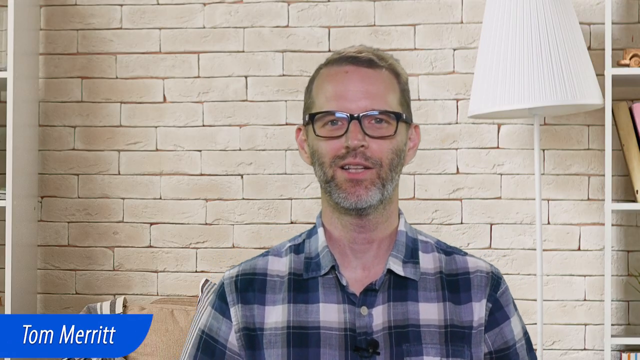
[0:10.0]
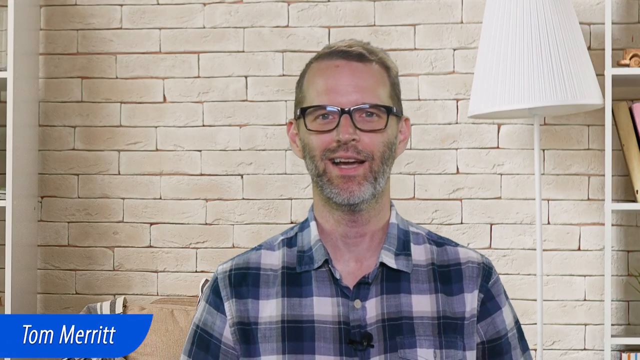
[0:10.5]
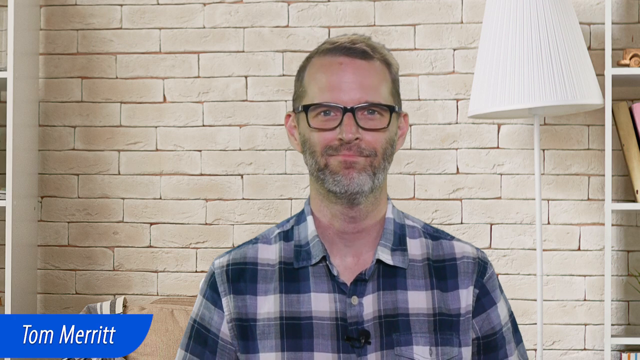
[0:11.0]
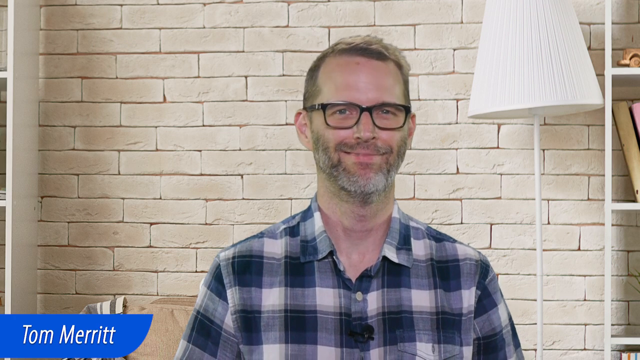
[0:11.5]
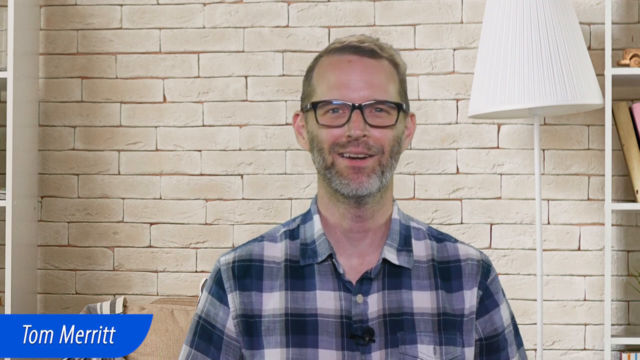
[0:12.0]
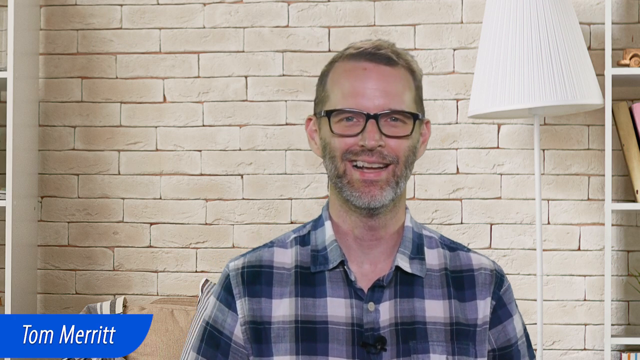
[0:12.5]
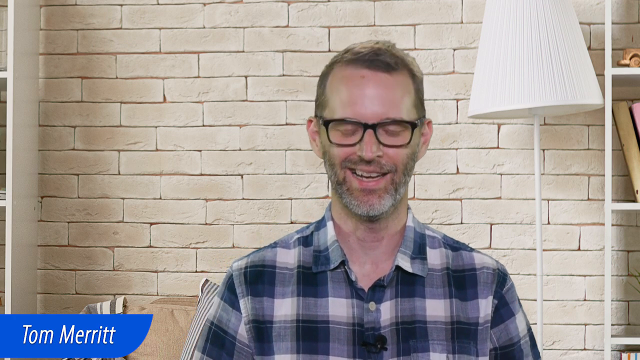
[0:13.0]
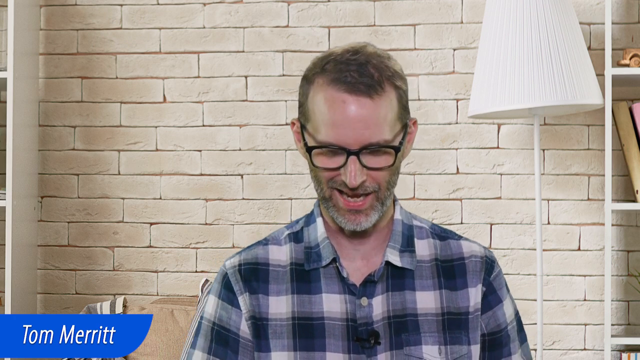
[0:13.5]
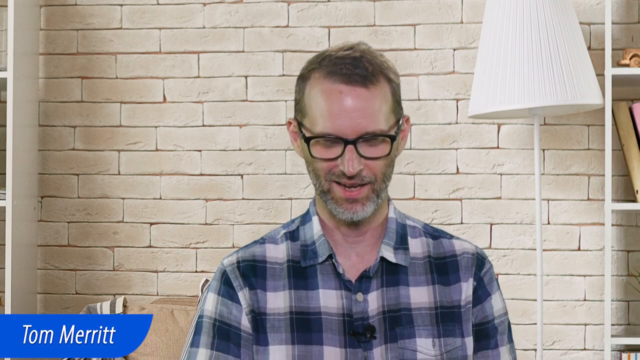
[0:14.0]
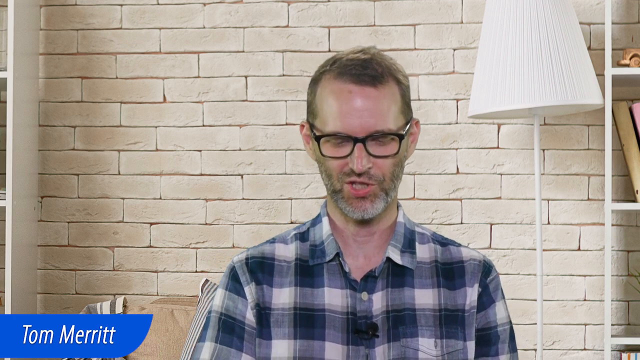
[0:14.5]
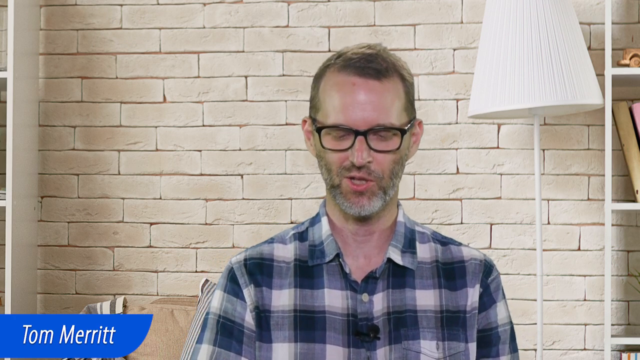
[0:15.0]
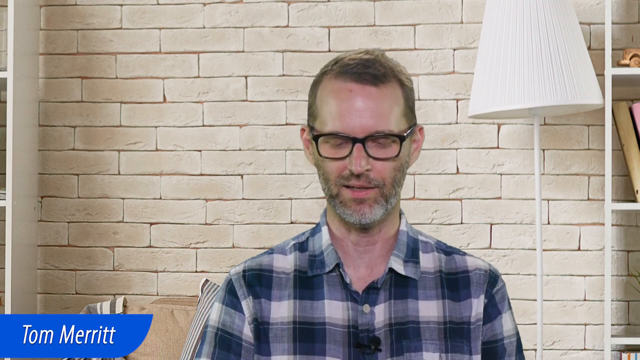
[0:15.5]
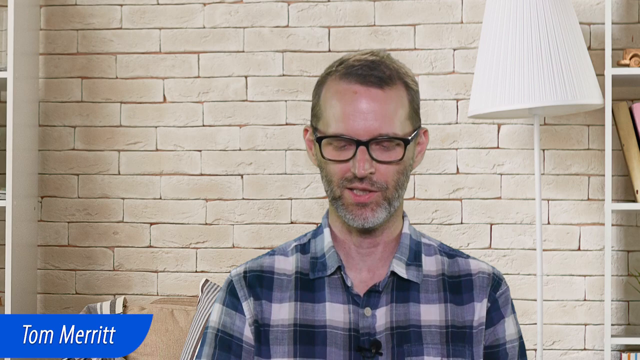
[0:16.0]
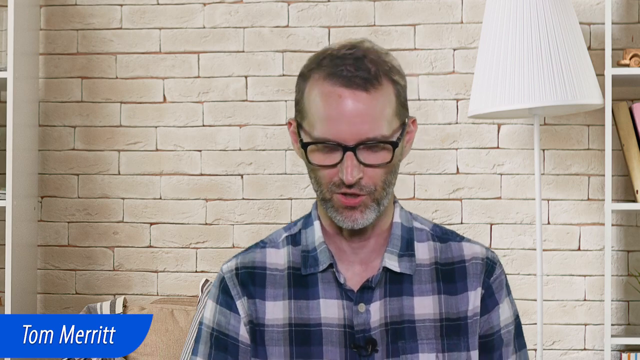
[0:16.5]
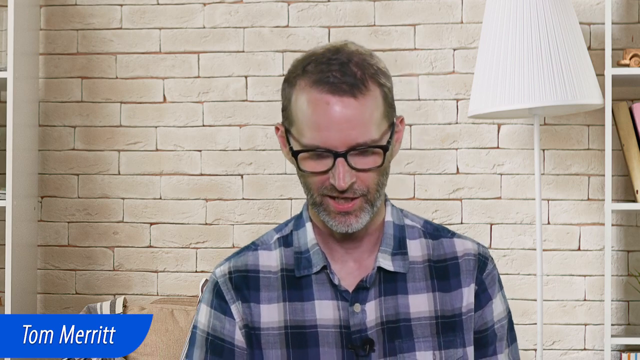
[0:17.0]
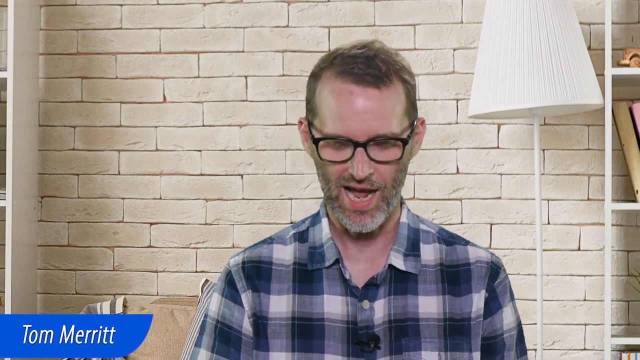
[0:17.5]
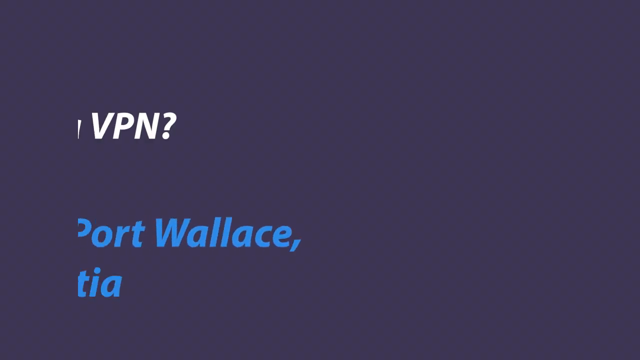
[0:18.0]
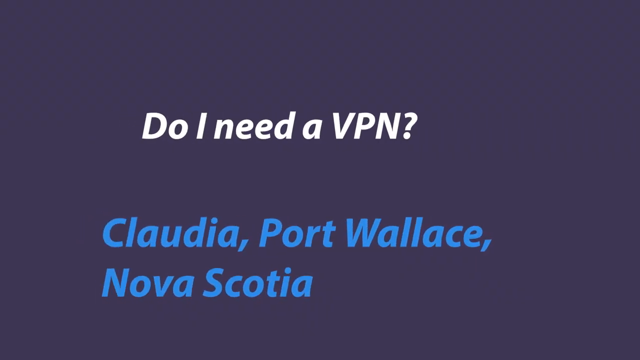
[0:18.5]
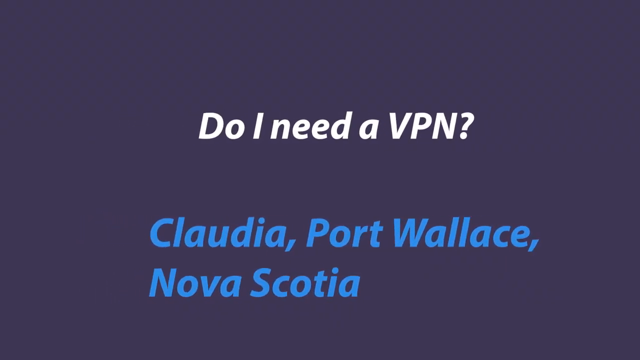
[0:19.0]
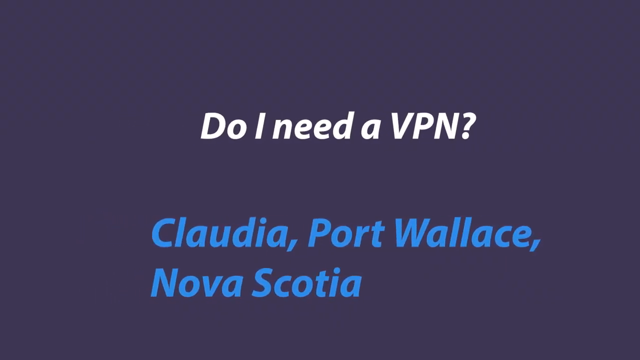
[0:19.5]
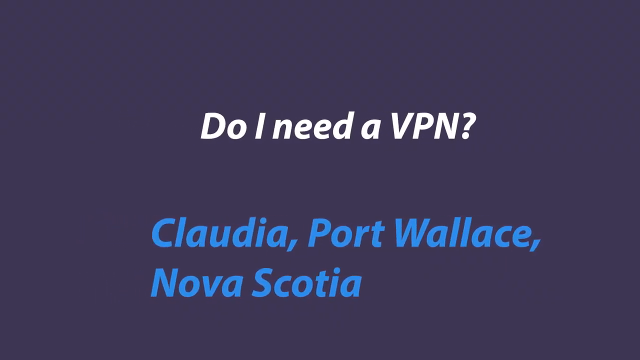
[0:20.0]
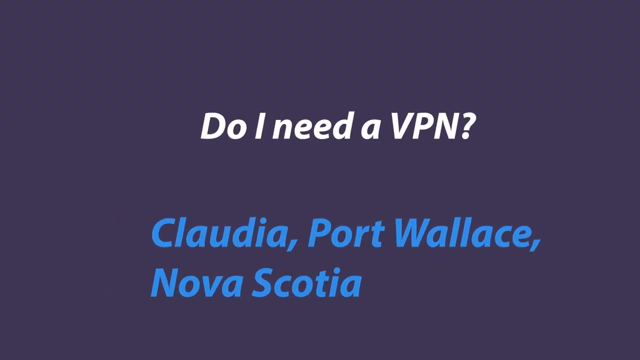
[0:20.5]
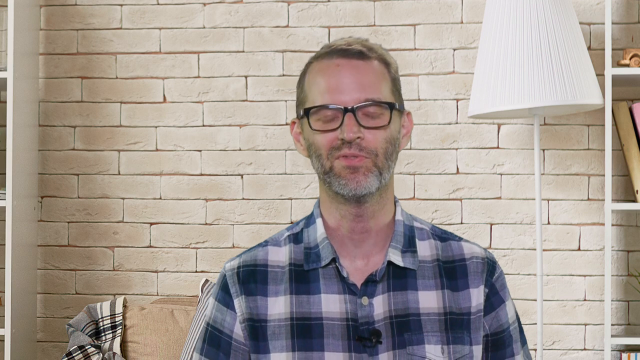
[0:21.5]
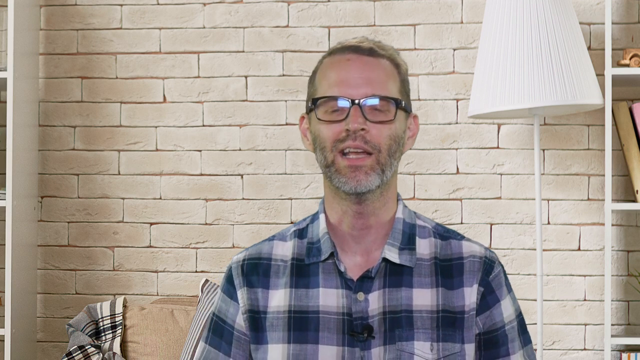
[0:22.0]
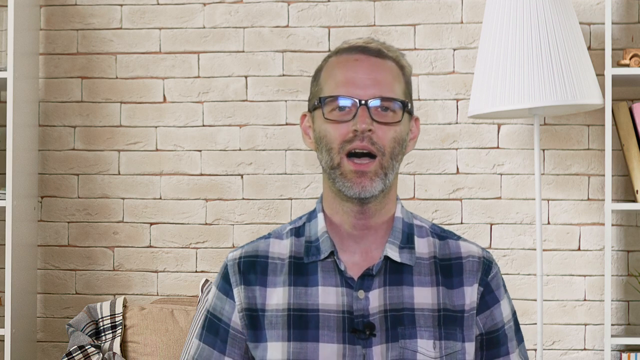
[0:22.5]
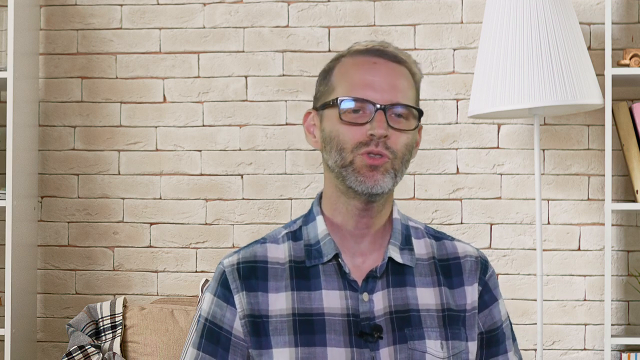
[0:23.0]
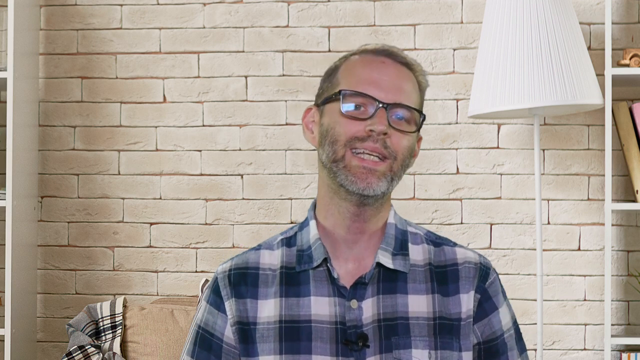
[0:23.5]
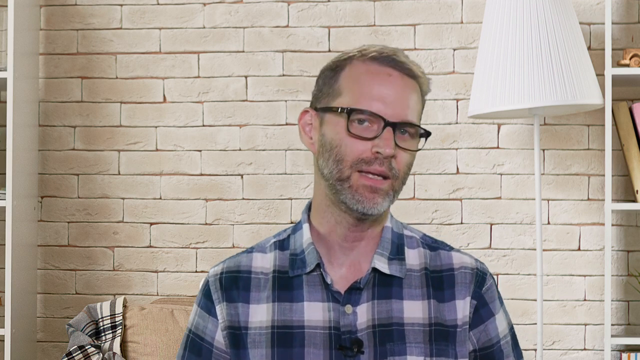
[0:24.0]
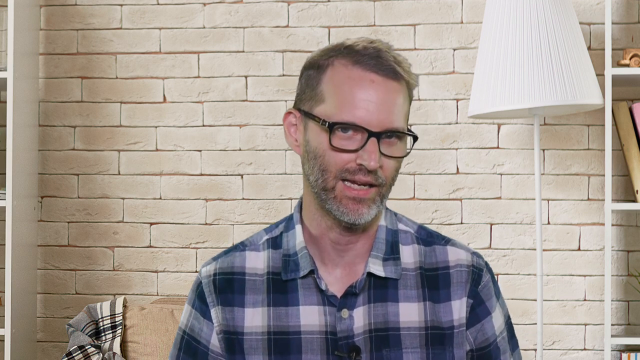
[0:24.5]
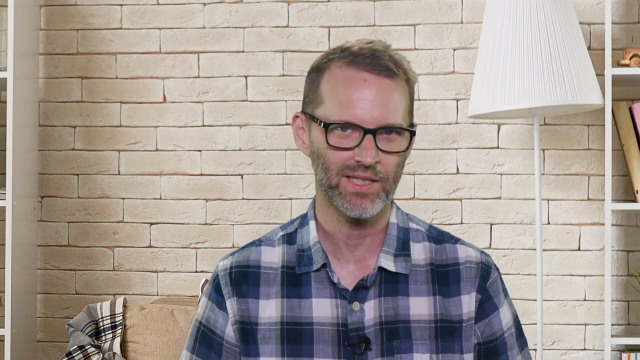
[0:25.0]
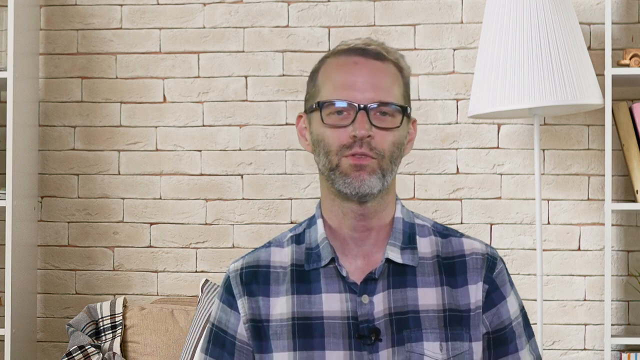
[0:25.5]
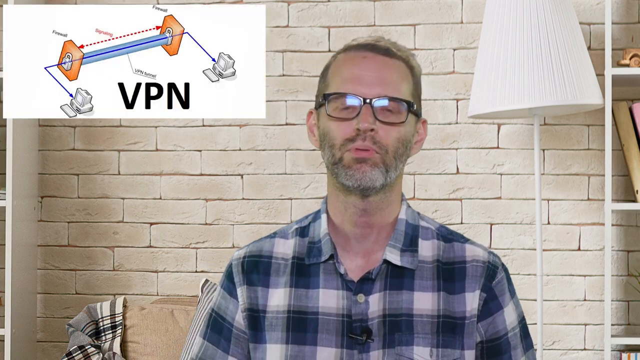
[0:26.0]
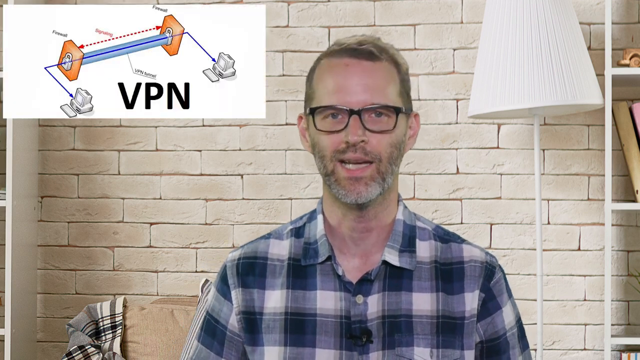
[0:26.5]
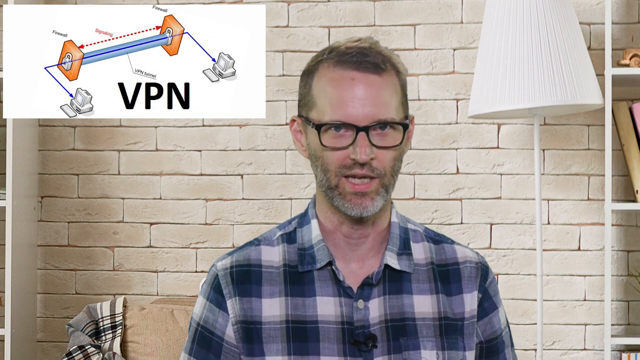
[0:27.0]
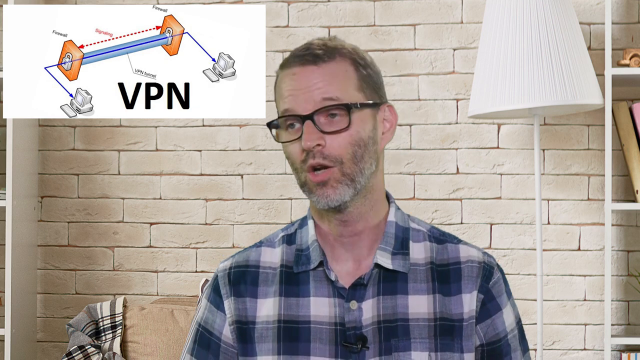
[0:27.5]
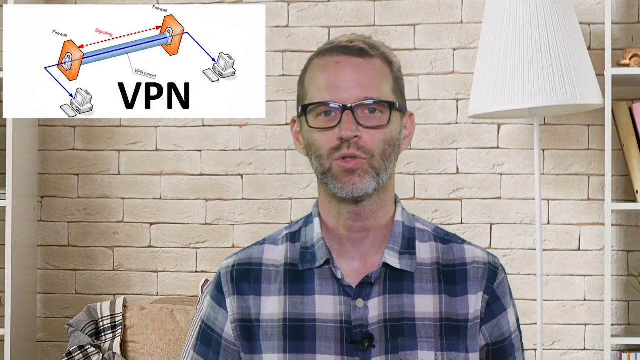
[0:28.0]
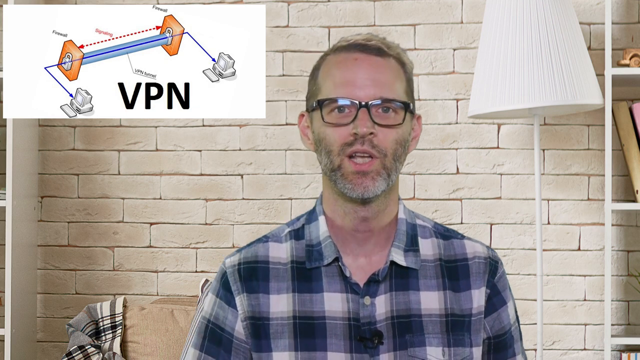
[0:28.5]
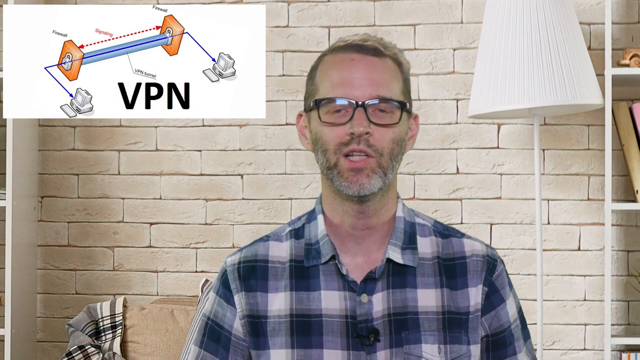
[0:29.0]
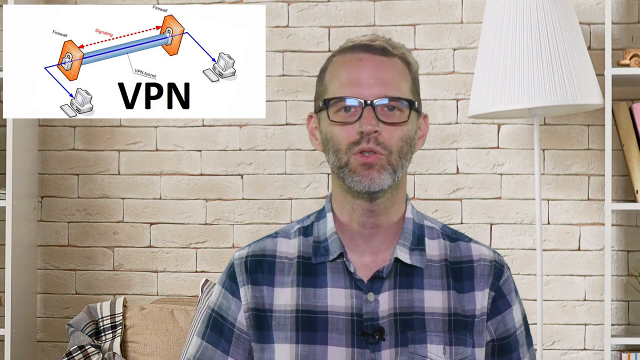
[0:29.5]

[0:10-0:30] The man looks at the camera with a smile and a mischievous look, then looks down a bit and seems to be reading off a paper. He shifts his body around. A quick transition shows text that says "do I need to understand this one?", which looks like a question asked by someone; the text is kind of outlined, and the text below it is blue. The shot returns to the man talking, and a diagram that seems to show how a VPN works appears in the top left of the screen. He continues talking to the camera, looking away now and then but maintaining eye contact, with subtle body movements and cheery expressions.